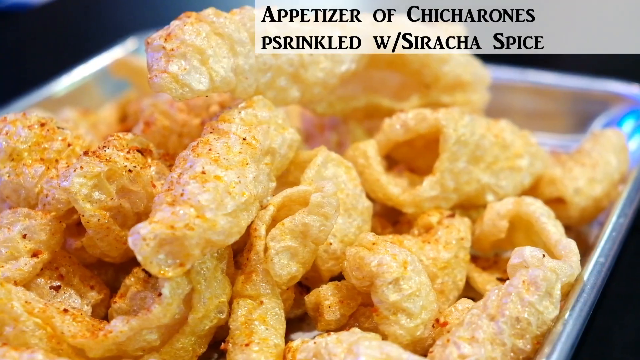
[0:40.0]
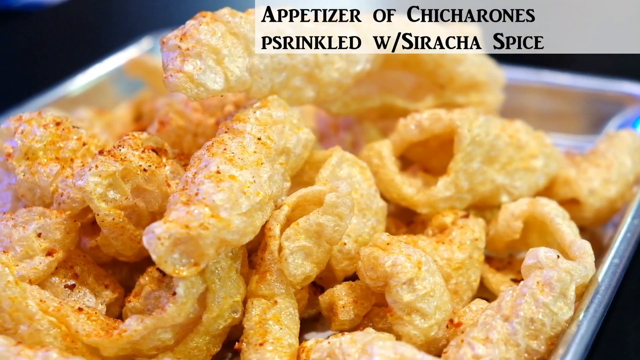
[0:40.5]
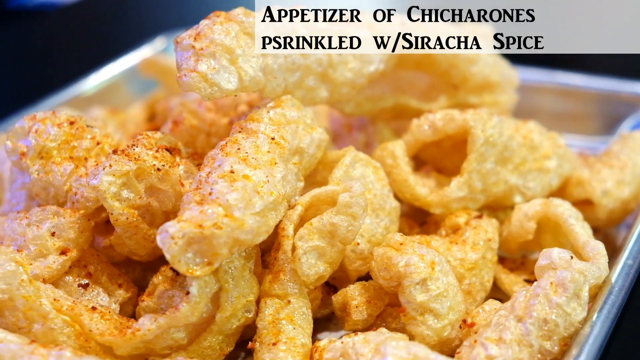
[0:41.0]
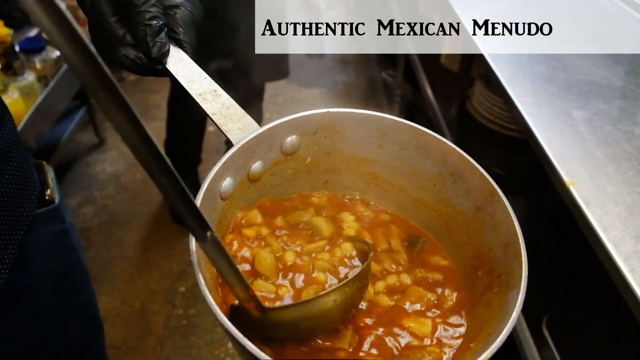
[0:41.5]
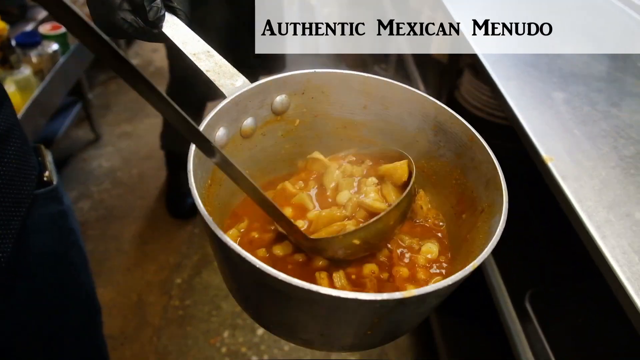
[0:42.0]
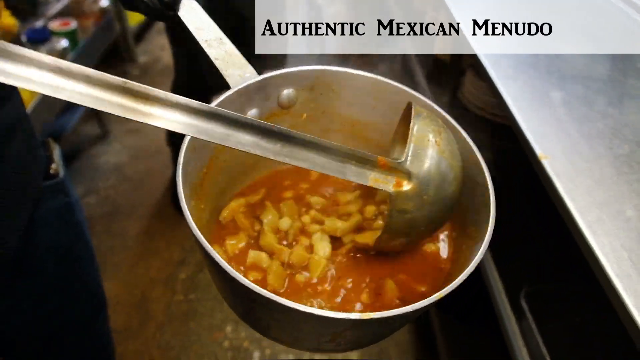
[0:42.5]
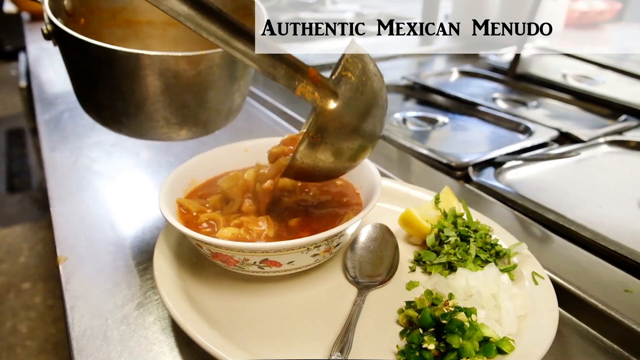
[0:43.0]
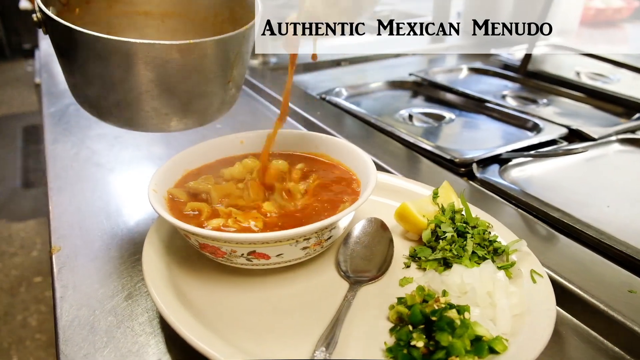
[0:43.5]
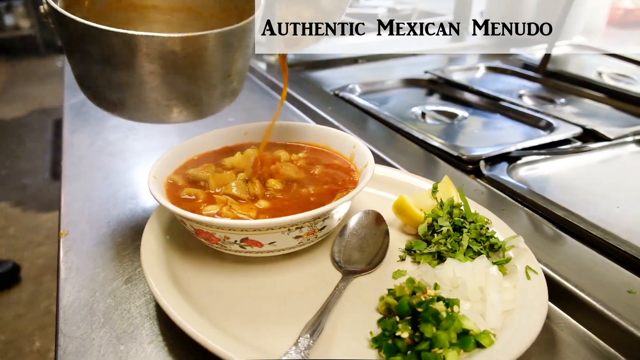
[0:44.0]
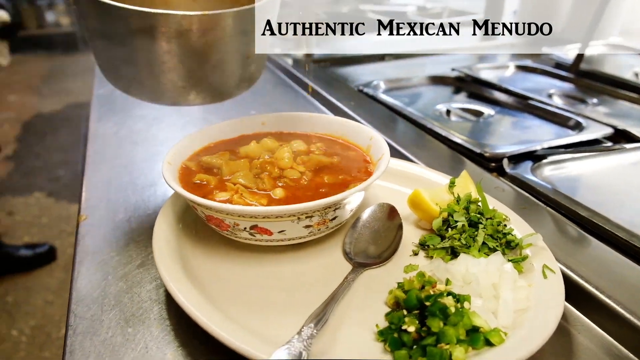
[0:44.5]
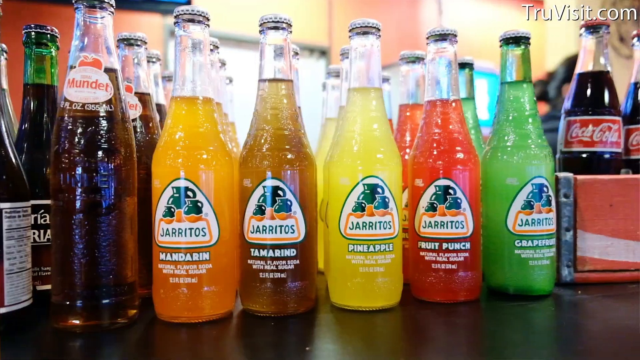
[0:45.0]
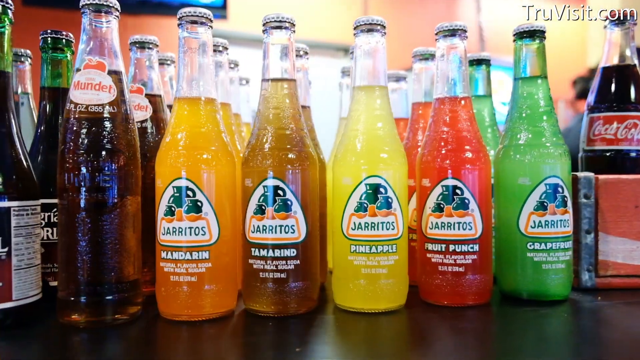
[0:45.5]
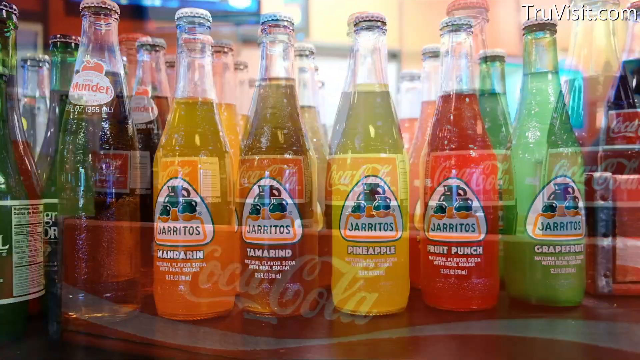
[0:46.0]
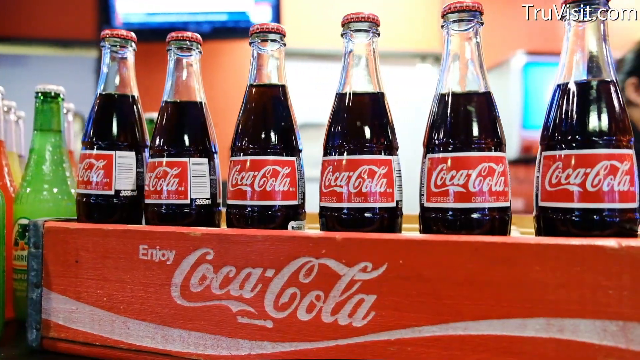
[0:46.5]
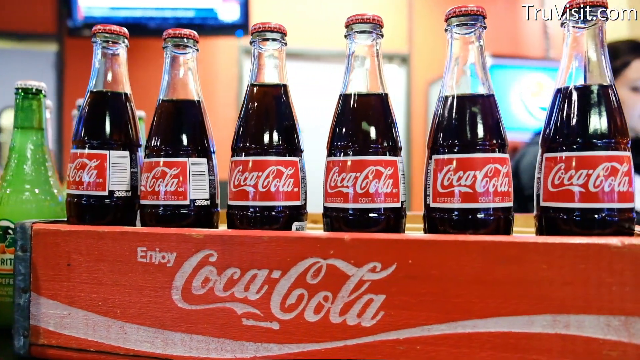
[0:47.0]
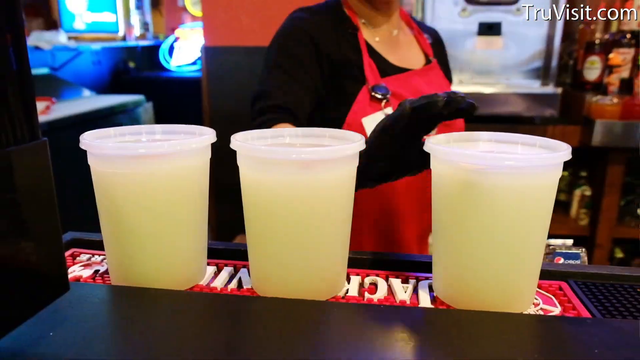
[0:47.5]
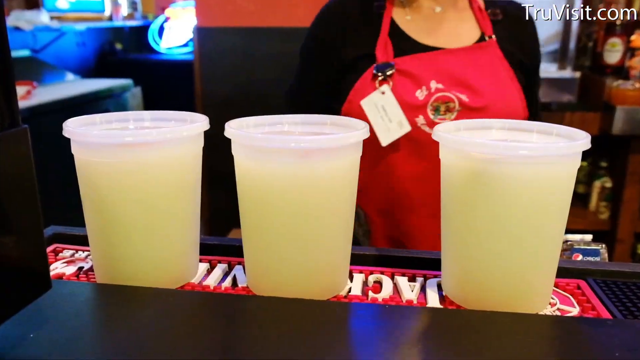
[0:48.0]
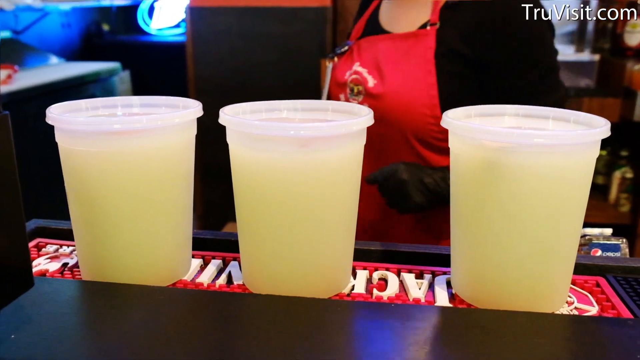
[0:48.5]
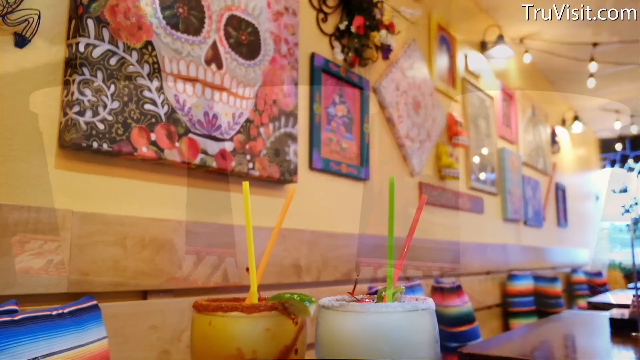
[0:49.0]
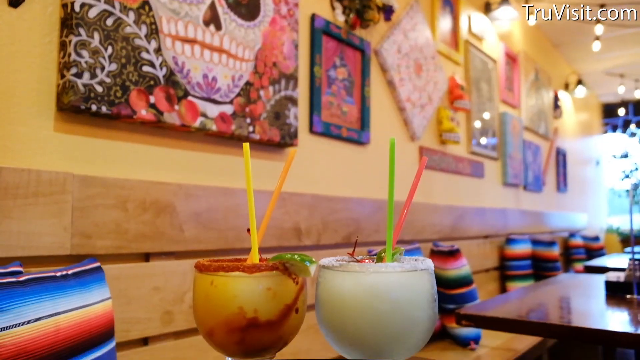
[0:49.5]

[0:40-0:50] An appetizer of chicharones sprinkled with sriracha spice appears to be in a silver dish. In the back, a different dish is spooned up with a large ladle; text reads "authentic Mexican menudo" as it is spooned into a very large bowl. On the plate are lemon and lime and what looks like some cilantro. The video cuts to a wide variety of drinks, including many Jarritos in mandarin, pineapple and fruit punch, Coca-Cola, and other drinks containing alcohol.